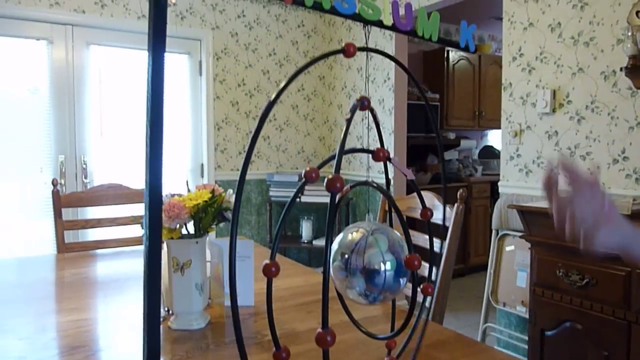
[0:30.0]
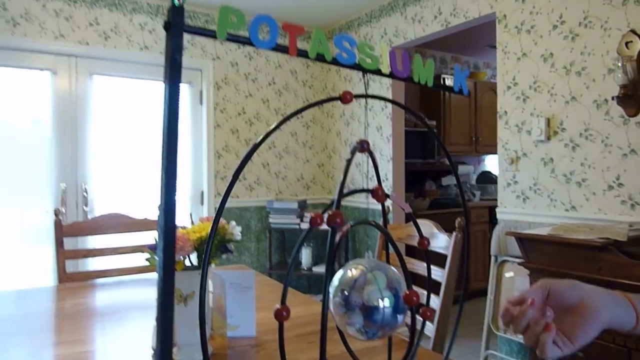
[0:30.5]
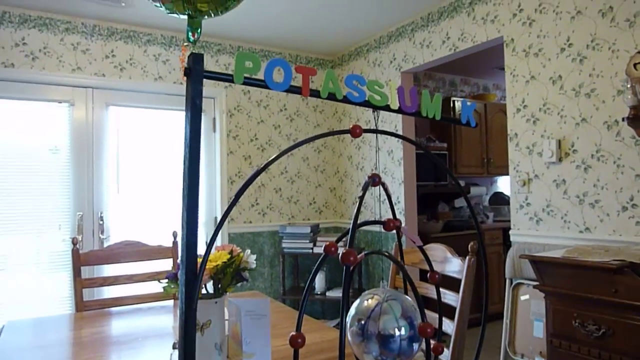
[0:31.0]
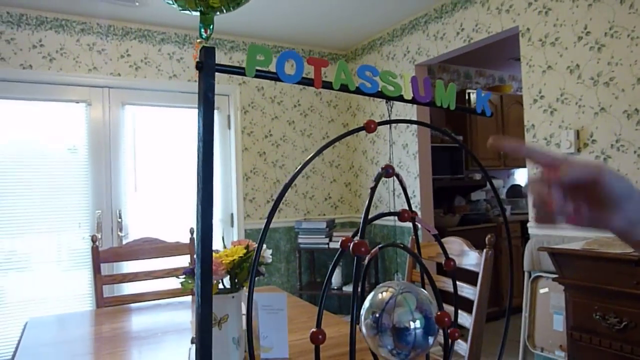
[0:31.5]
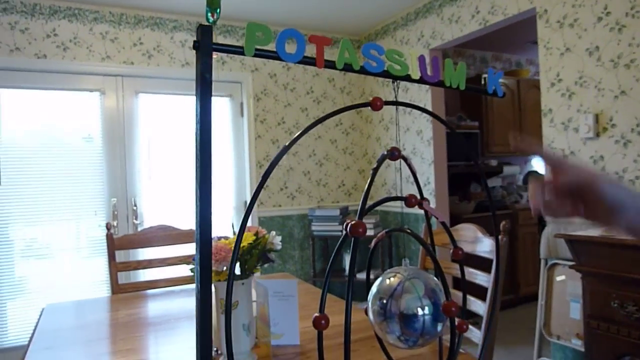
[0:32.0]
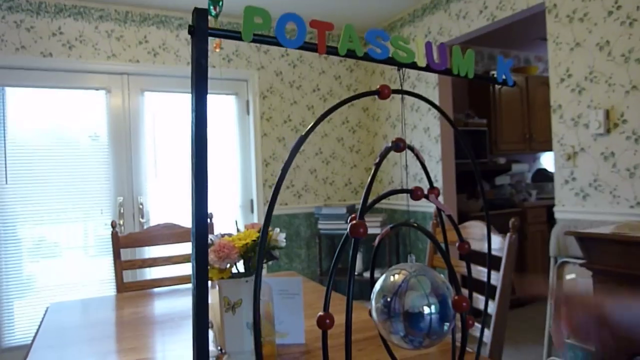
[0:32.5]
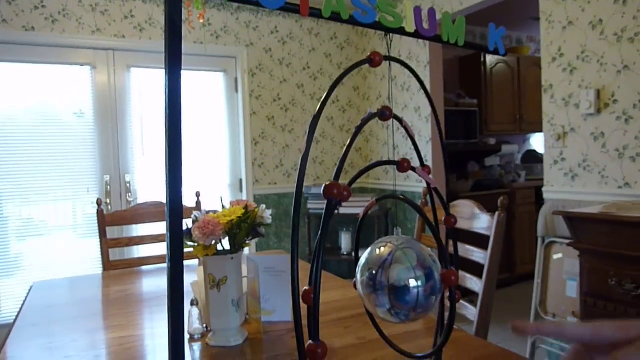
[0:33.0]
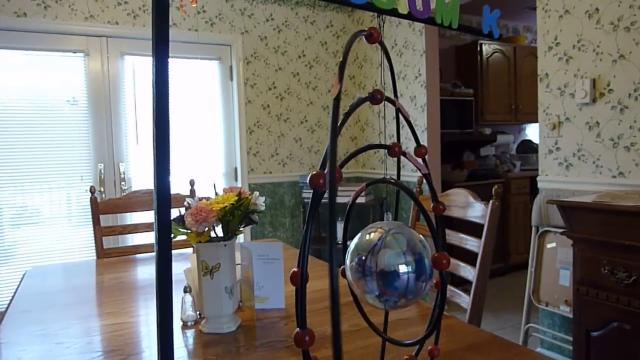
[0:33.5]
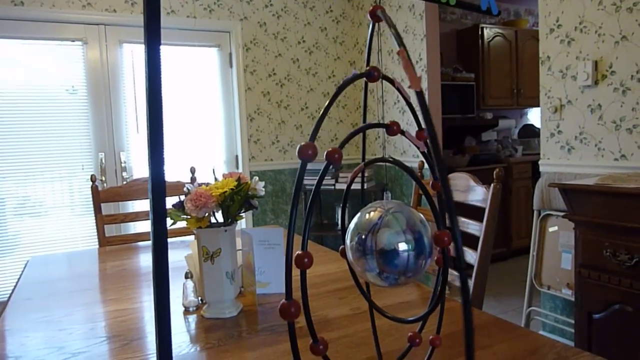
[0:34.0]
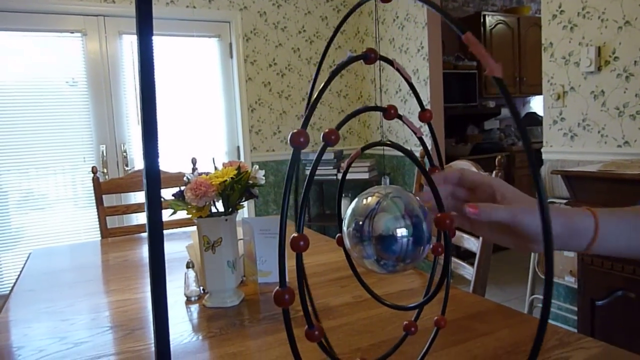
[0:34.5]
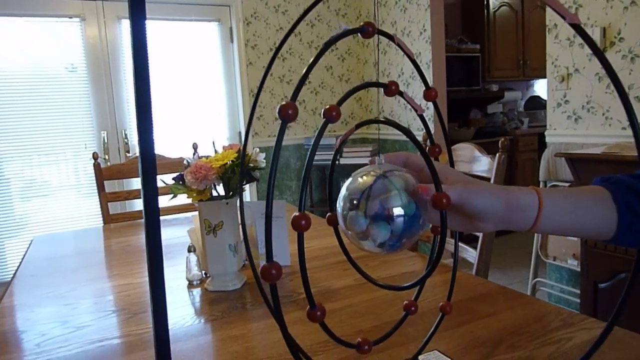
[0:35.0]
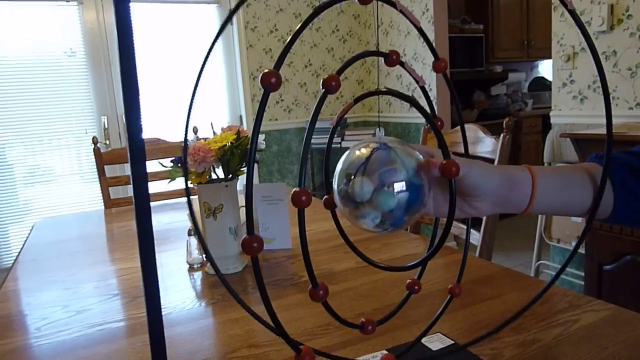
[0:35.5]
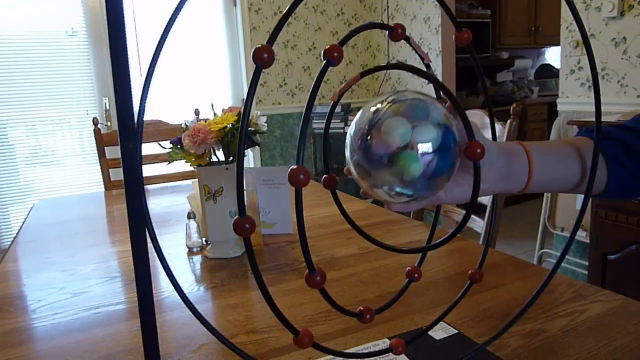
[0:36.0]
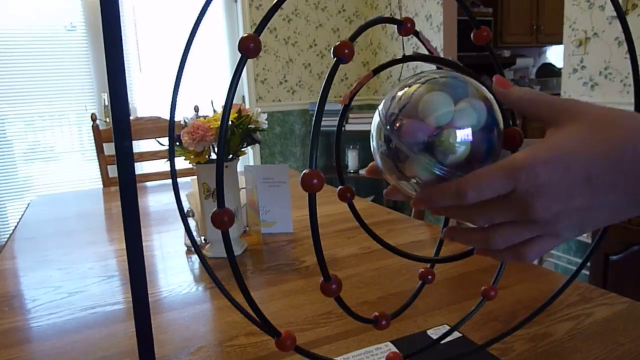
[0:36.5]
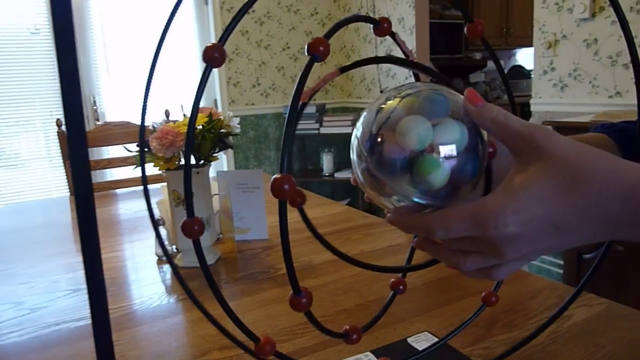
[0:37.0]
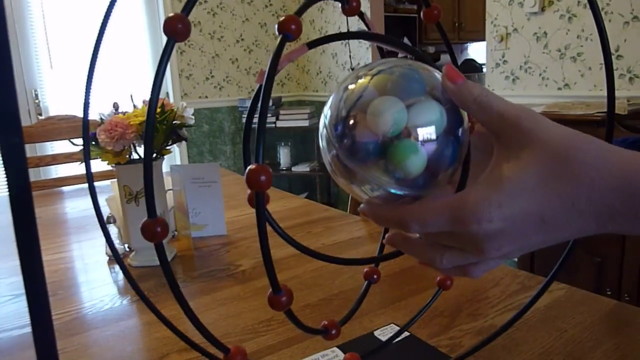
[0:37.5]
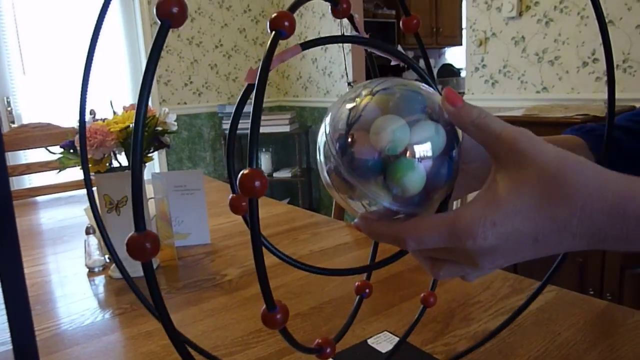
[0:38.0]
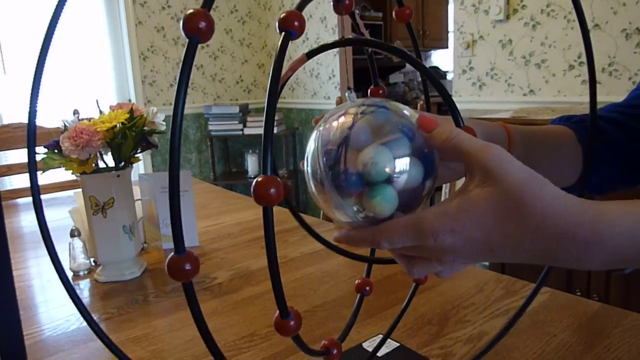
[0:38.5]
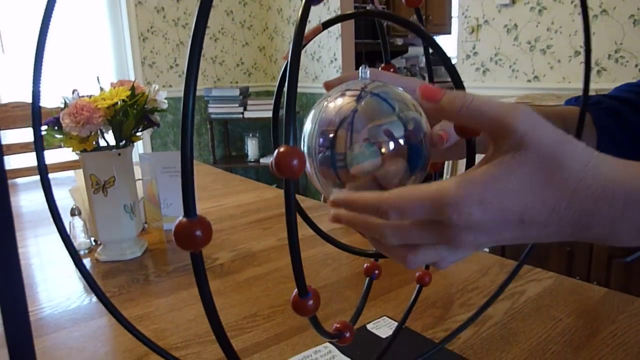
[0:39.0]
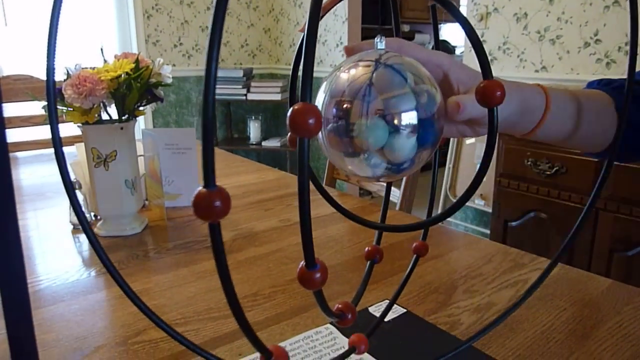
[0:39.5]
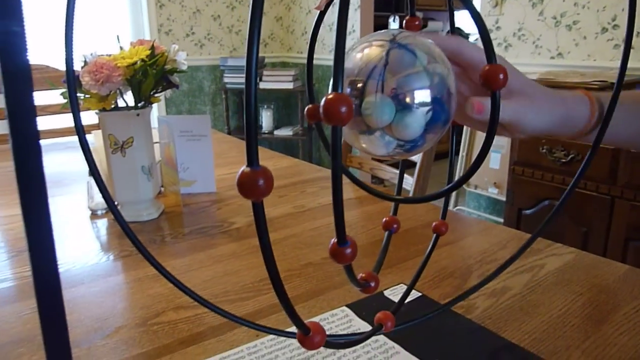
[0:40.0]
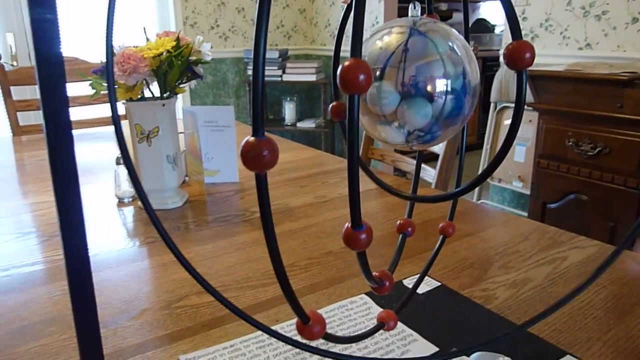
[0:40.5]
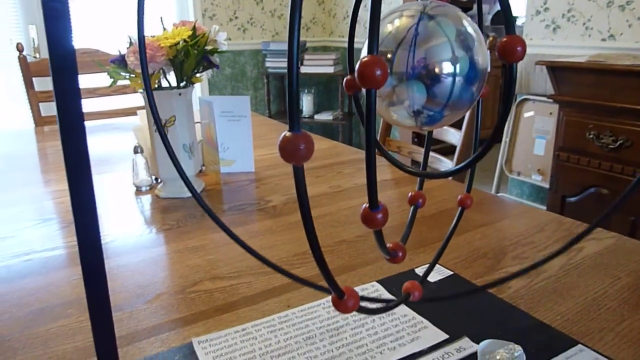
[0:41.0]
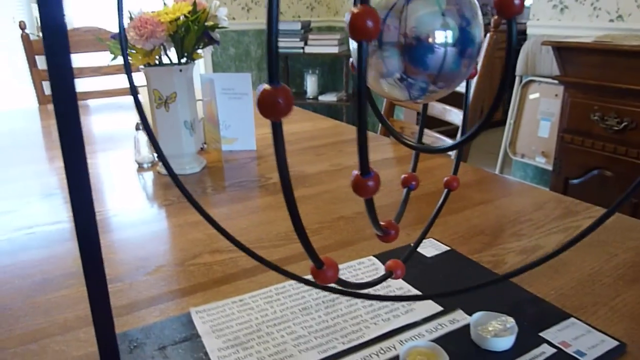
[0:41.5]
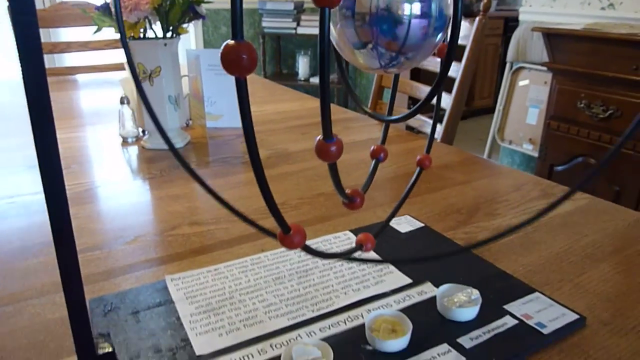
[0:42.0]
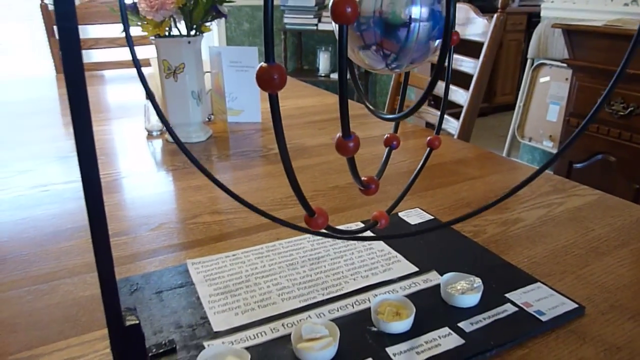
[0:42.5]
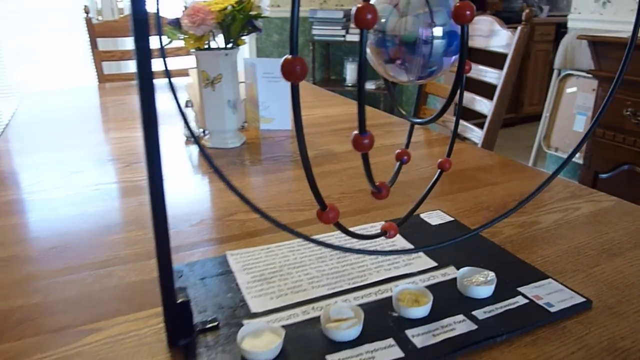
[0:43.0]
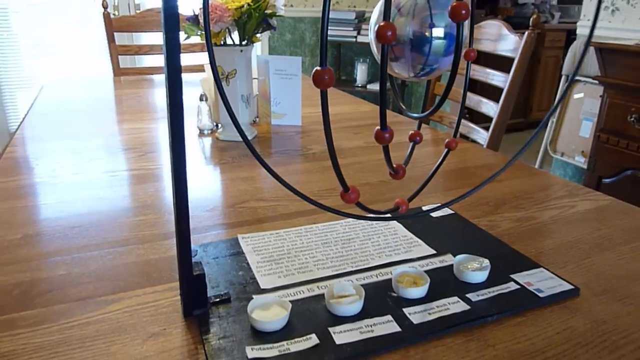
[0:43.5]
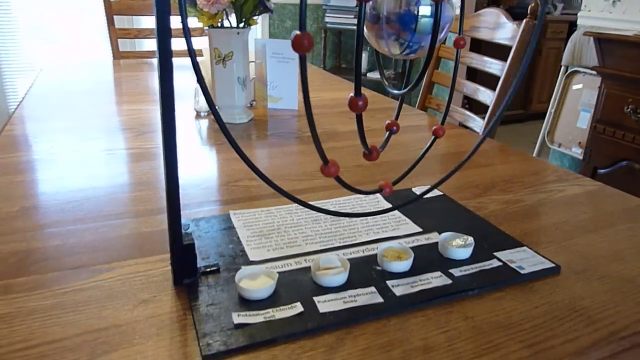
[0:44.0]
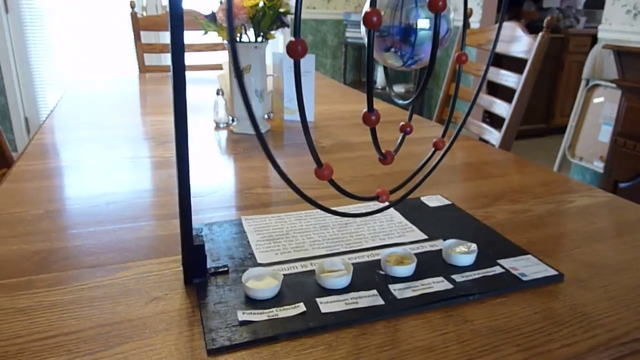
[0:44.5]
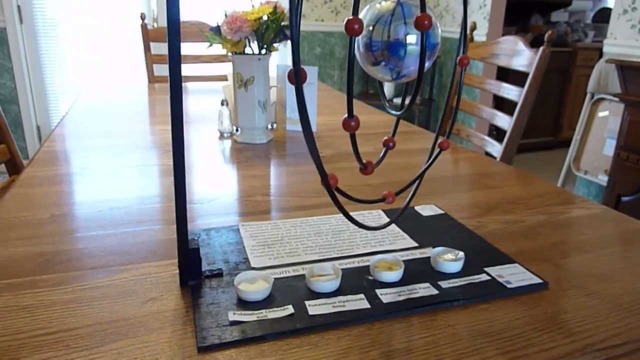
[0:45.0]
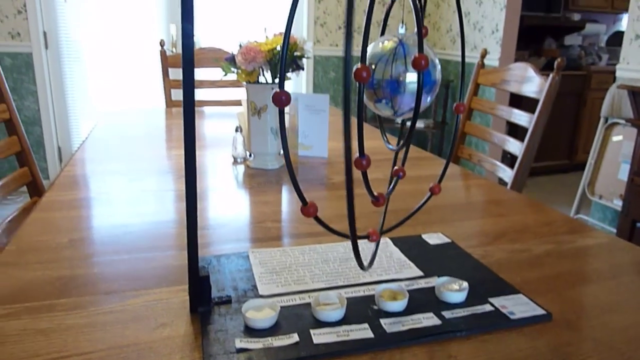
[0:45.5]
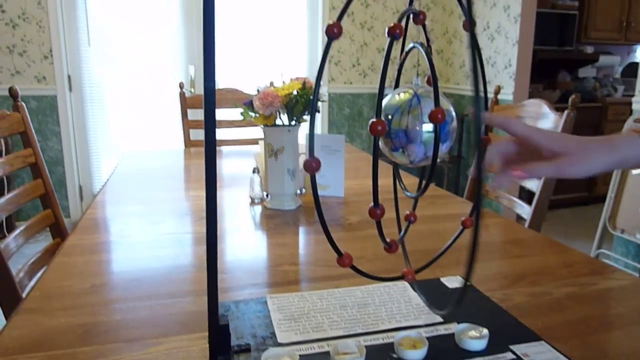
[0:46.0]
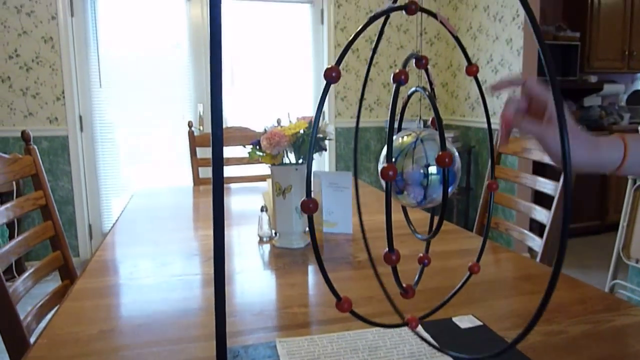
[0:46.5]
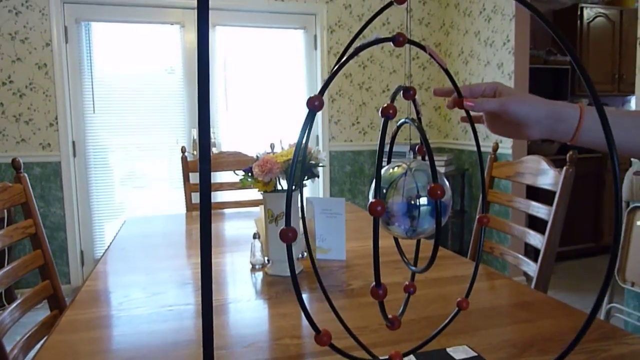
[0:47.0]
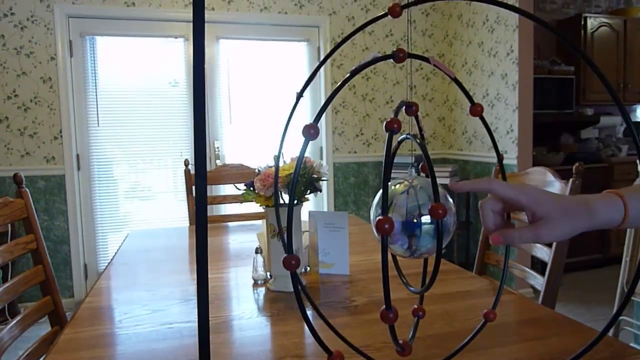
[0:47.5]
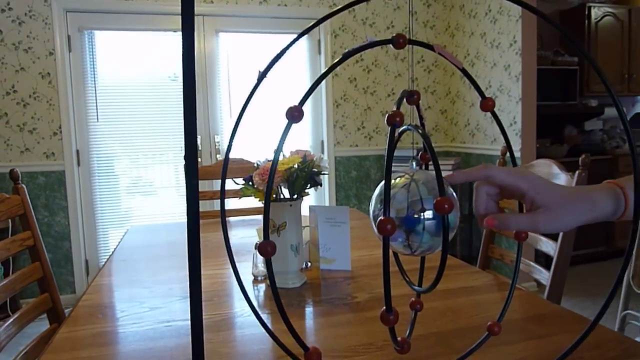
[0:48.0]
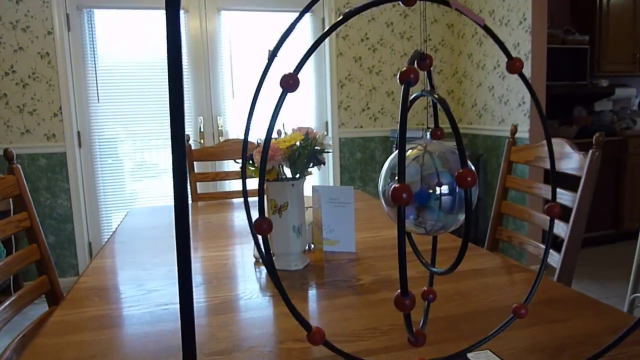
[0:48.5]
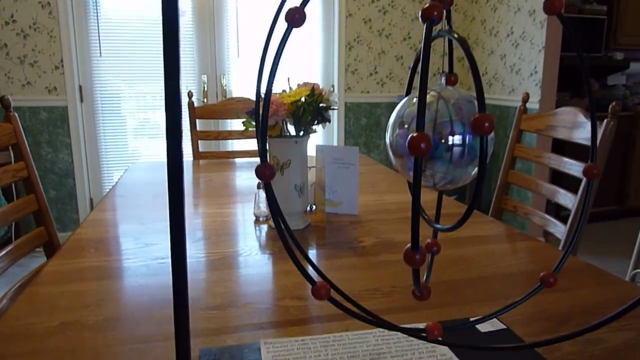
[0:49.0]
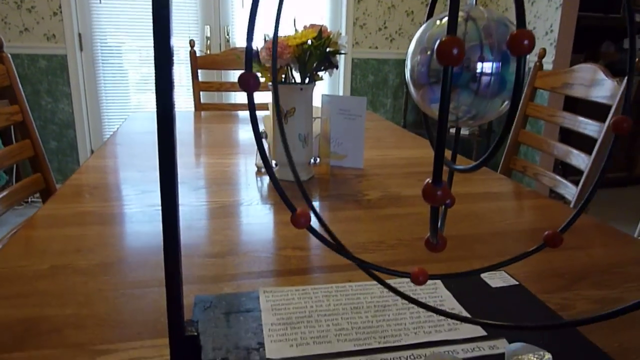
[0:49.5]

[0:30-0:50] The woman points at the model, apparently explaining it. She grabs the earth, then touches the top part of the smallest ring and makes motions as if the thing is turning, seemingly showing how it all spins. The bottom of the model has some writing on it, apparently giving more information about the model. There also appear to be four different globes or models at the bottom with labels, which cannot really be read. More of what looks like the kitchen is visible, with wooden dressers and wooden cabinets. The lighting is really dark.